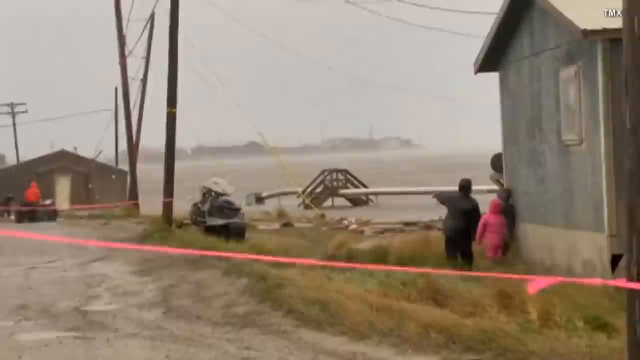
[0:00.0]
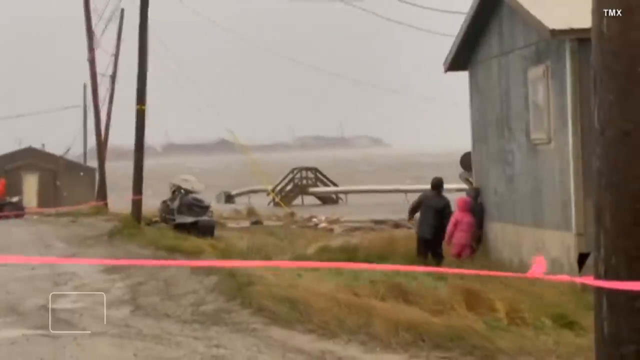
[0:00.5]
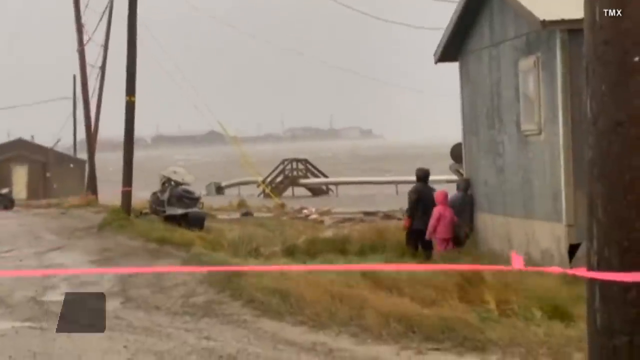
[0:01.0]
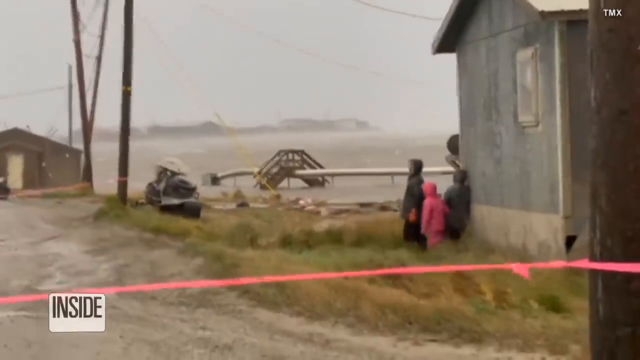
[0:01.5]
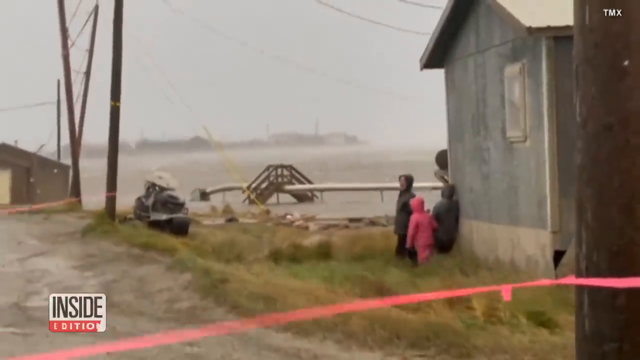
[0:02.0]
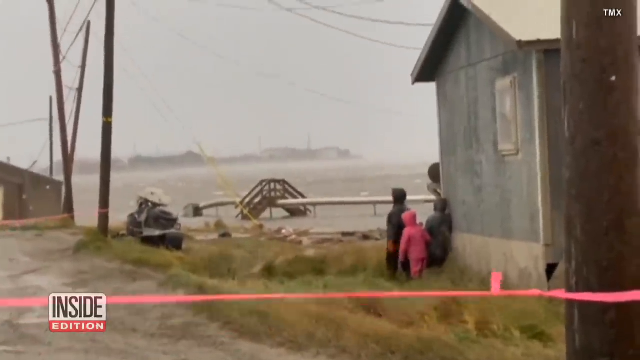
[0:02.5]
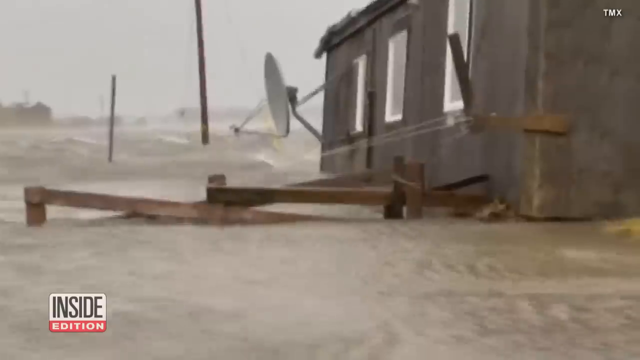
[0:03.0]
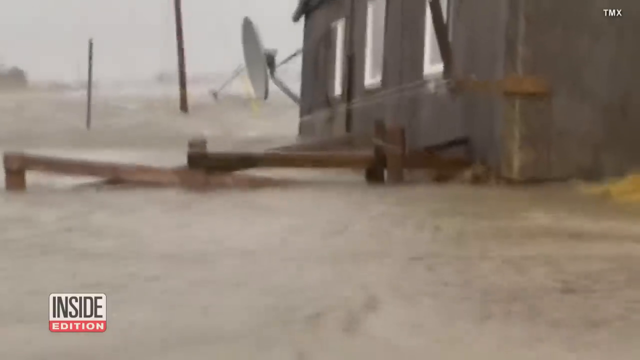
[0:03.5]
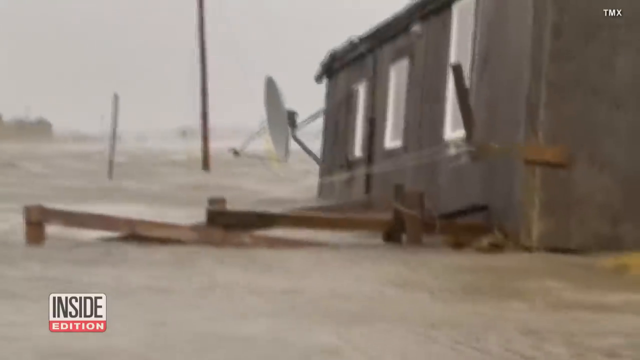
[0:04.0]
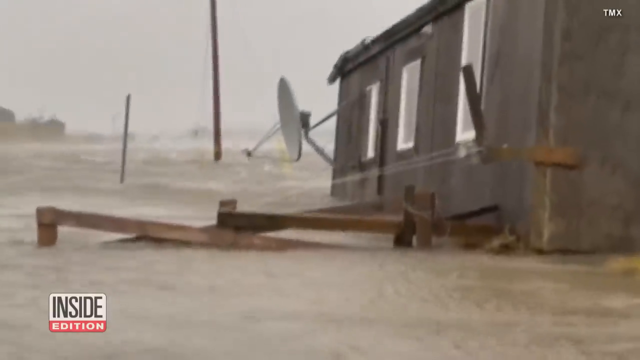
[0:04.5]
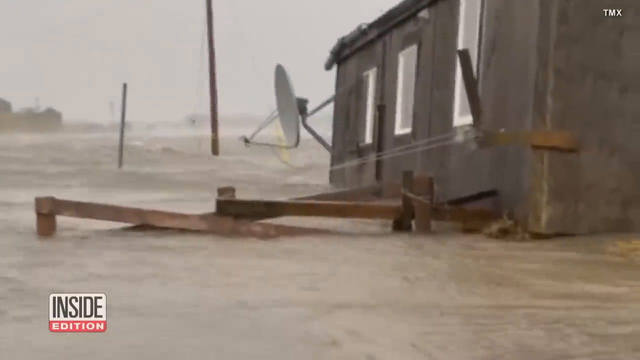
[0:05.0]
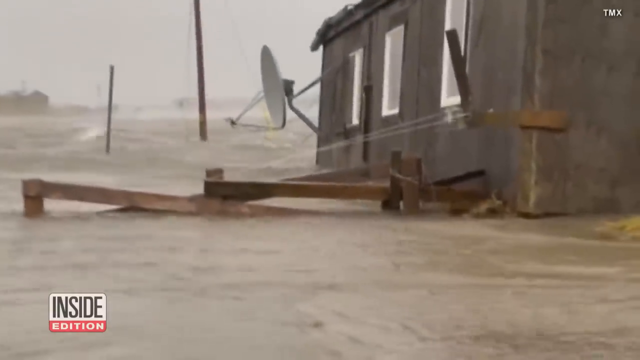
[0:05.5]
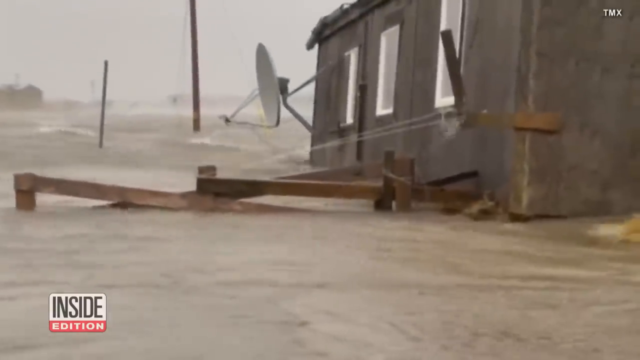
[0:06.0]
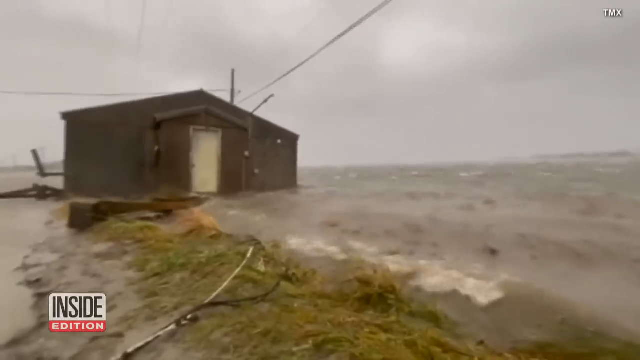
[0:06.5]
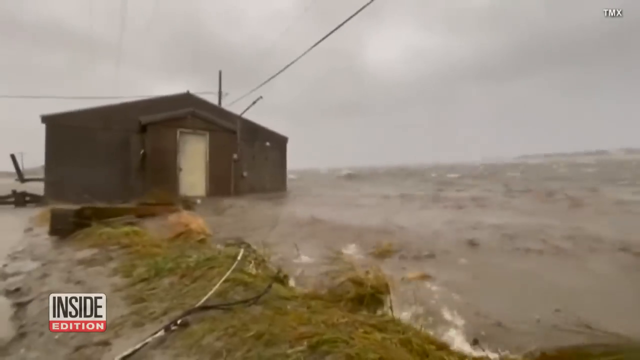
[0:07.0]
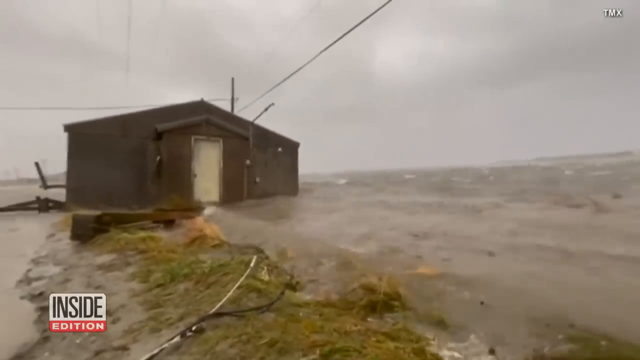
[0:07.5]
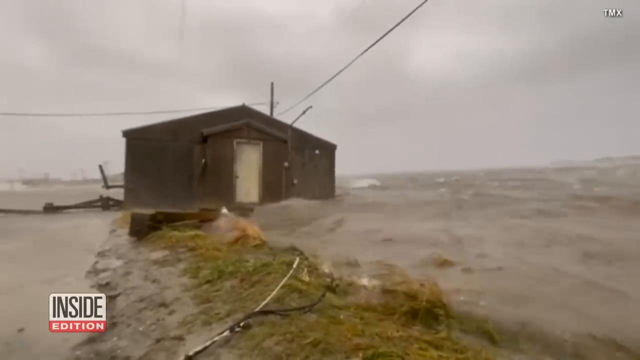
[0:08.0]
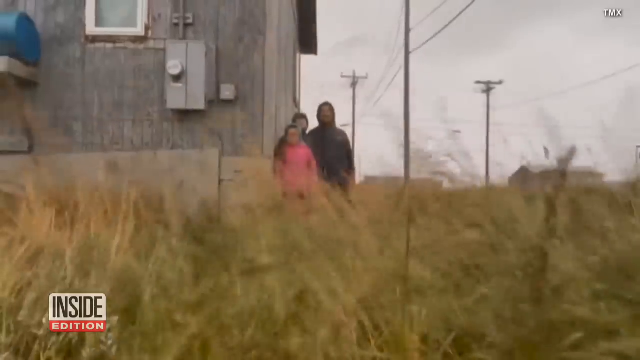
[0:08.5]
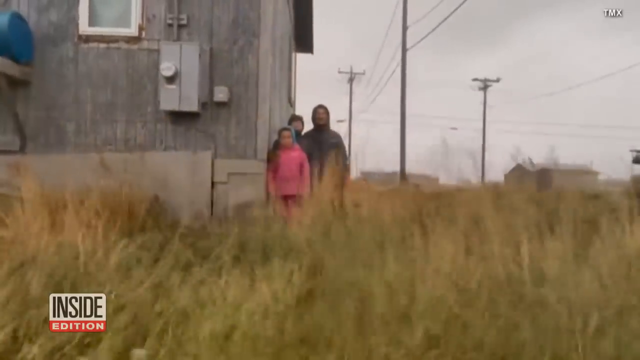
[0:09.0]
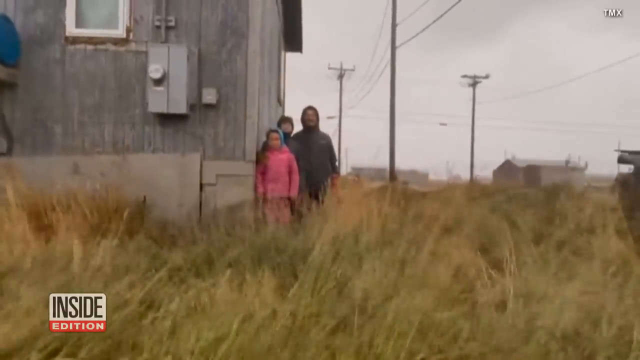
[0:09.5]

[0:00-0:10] Three children stare outward toward a large body of water in the middle of a storm. The one on the left wears a black coat, a smaller child on the right wears a gray coat, and the smallest child, in the middle, wears a pink coat and pants. They stand immediately to the left of a blue-gray building that has a window toward the upper right of its wall. A road runs off to the far left, and the children are standing in a grassy area. Much of the land in front of them appears to have been overtaken by the storm waters.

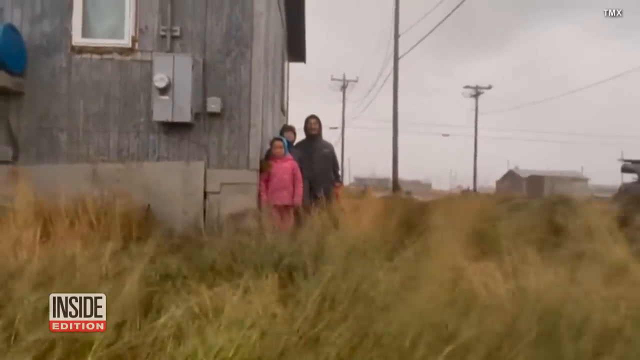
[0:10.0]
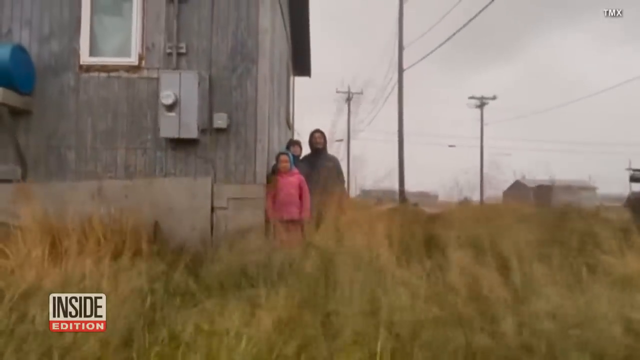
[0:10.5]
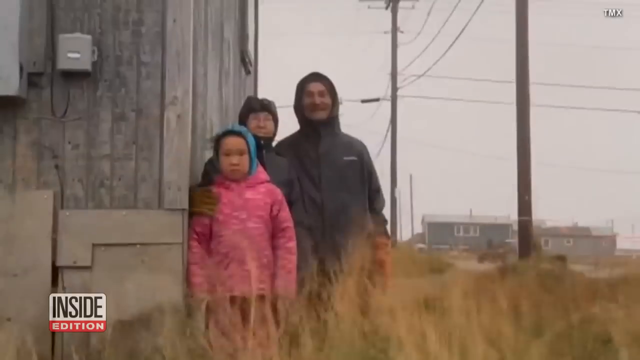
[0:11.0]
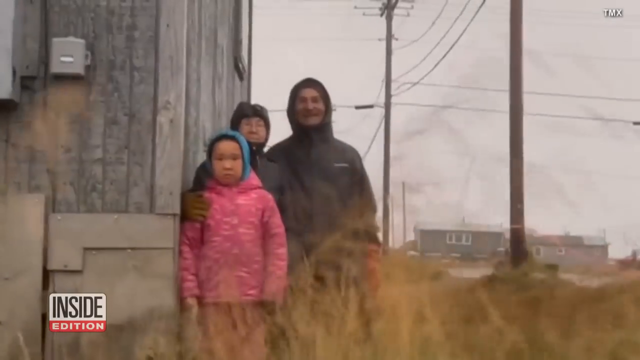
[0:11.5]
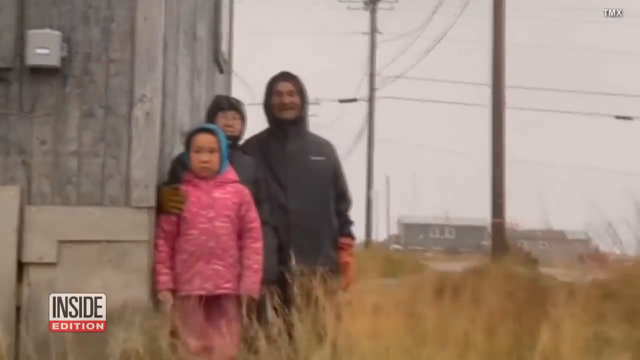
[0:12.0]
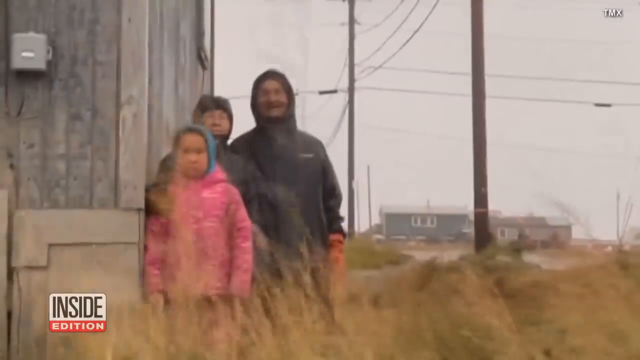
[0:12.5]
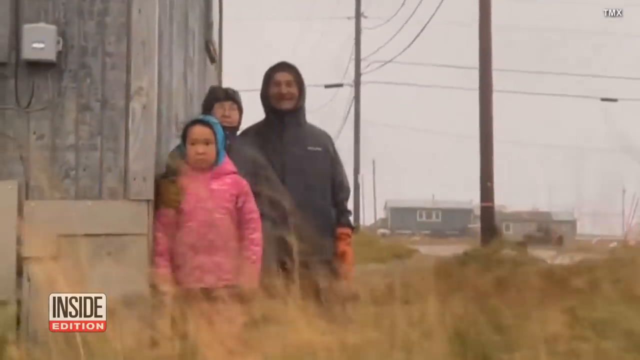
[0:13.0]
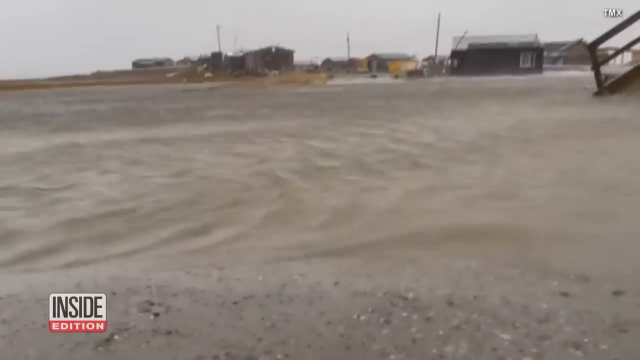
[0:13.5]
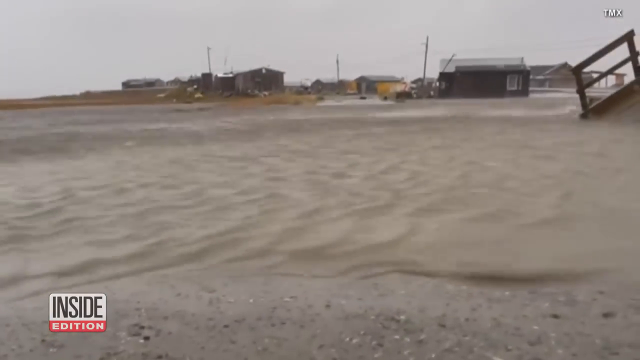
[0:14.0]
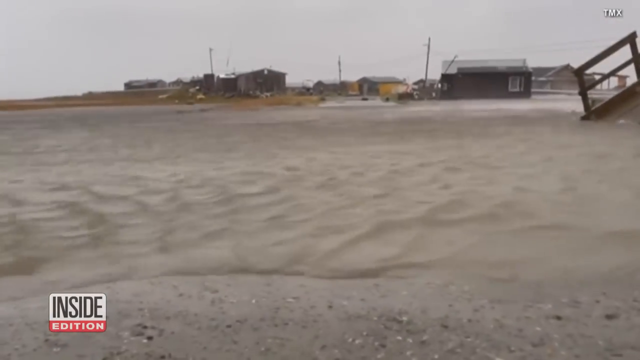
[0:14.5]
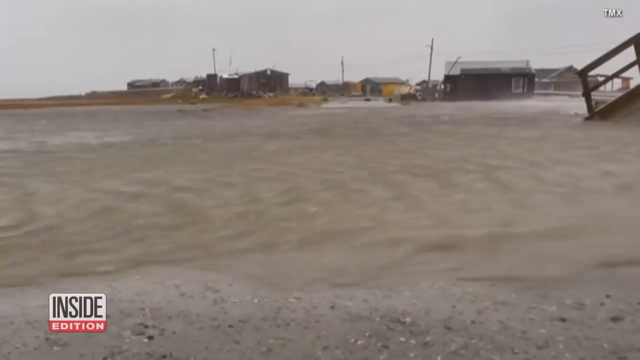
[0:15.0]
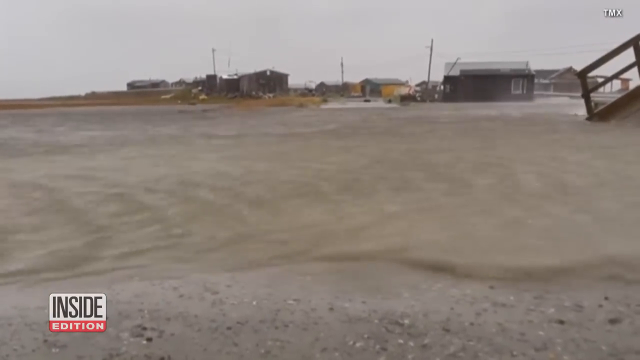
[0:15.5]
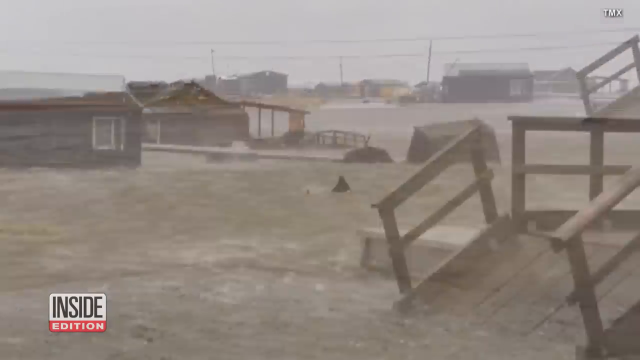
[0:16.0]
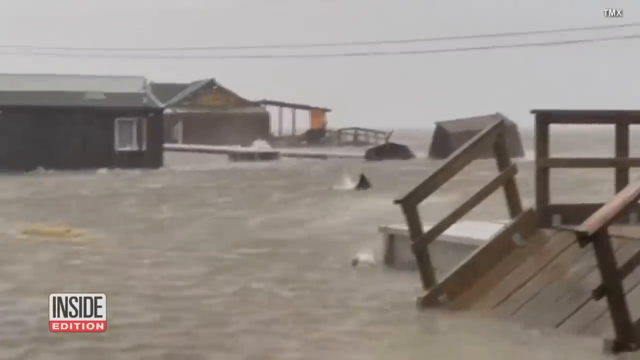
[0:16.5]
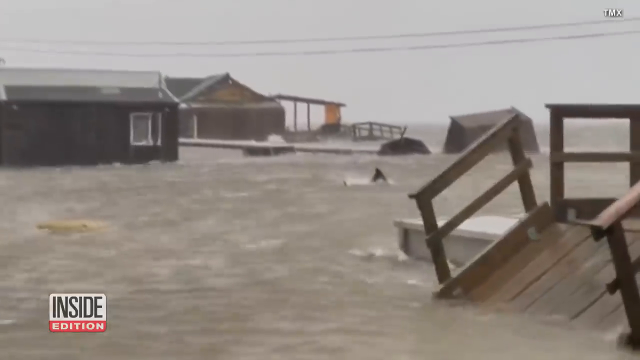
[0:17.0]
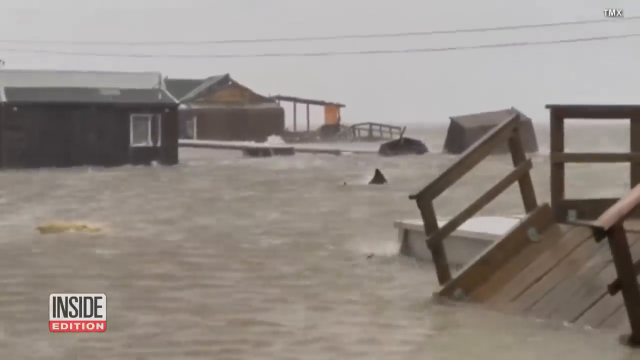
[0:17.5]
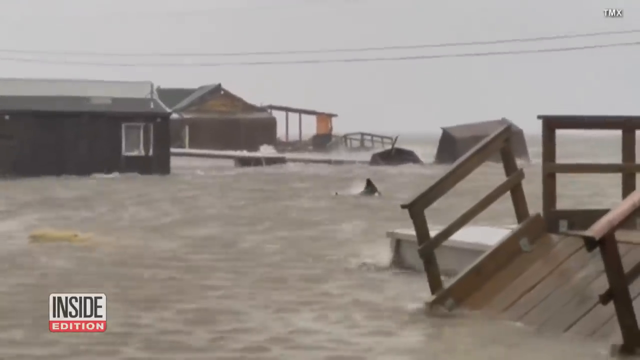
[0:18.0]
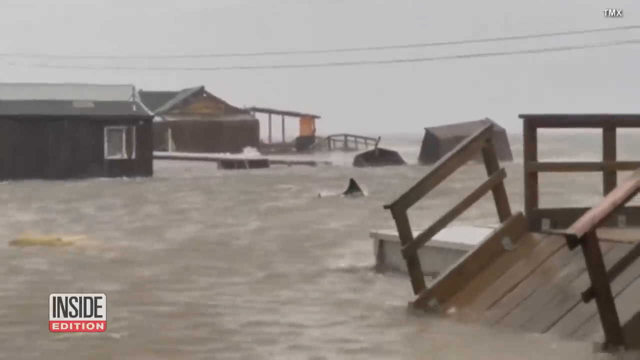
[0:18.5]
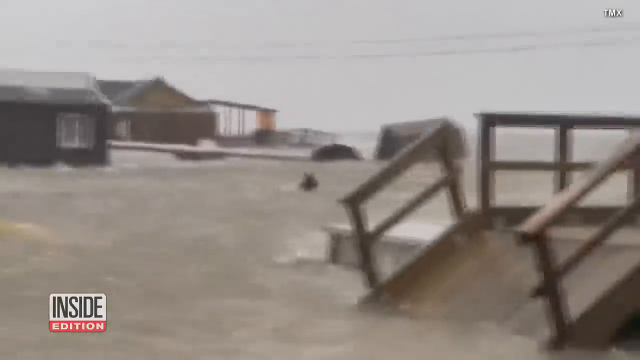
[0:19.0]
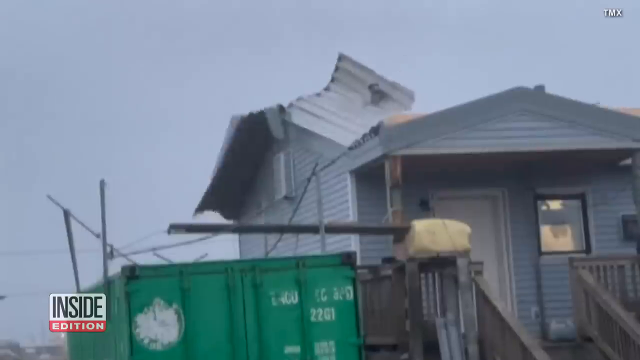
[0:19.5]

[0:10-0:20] A front-facing view of the three individuals gives a clearer picture of their faces; they appear to be of Asian origin or descent. The two on the left appear to be frowning, while the male on the right is smiling and holding on to the other two. The storm continues to affect the area, and several houses are visible in the distance. An icon and text for Inside Edition appear in the lower left corner, and the abbreviation "TMX" is in the upper right corner. A cut then shows the destructive power of the storm, with many other buildings overtaken and destroyed by floods and high current.